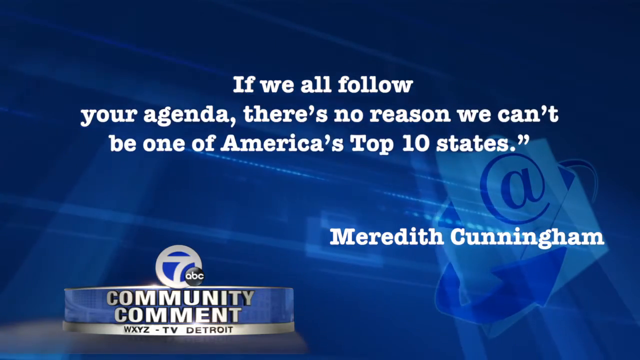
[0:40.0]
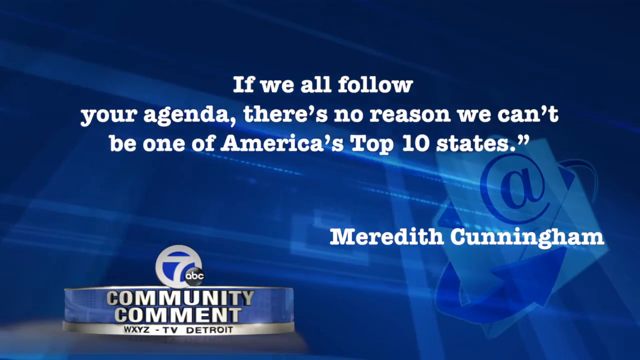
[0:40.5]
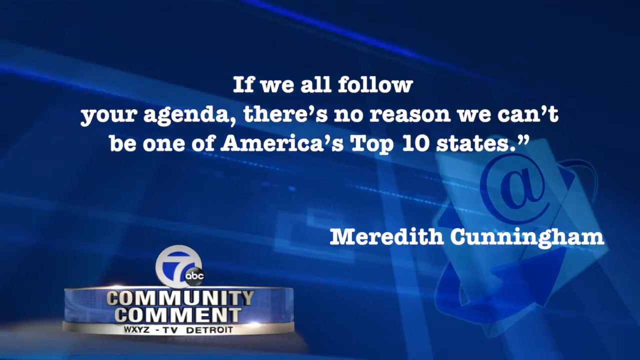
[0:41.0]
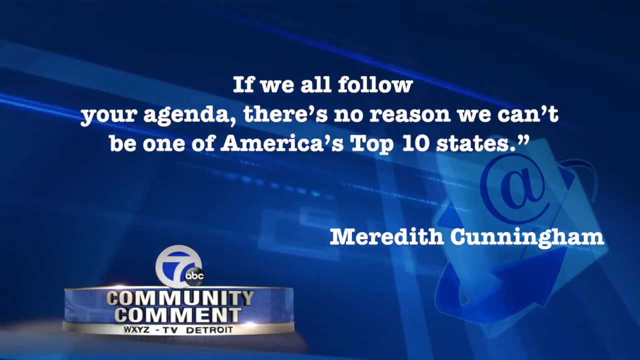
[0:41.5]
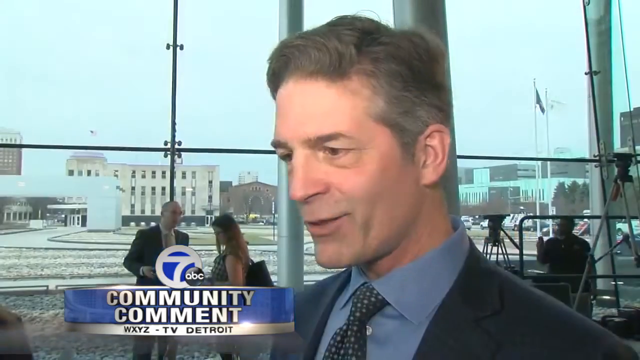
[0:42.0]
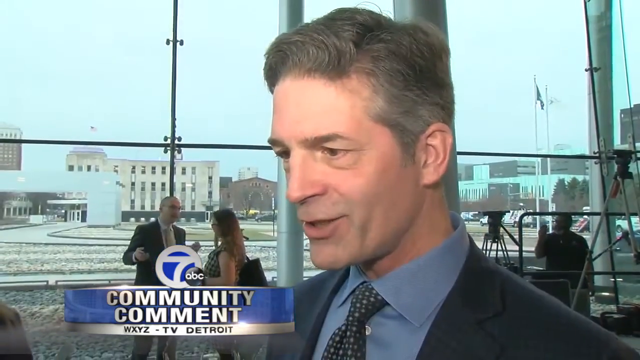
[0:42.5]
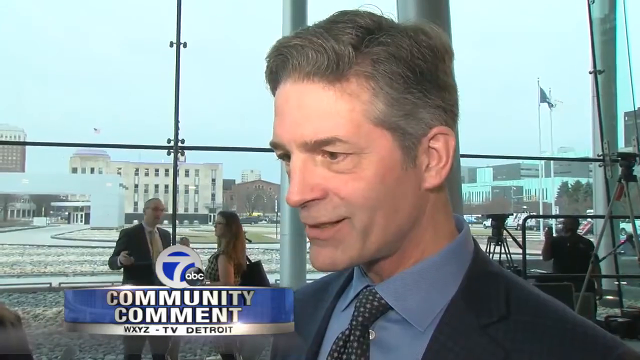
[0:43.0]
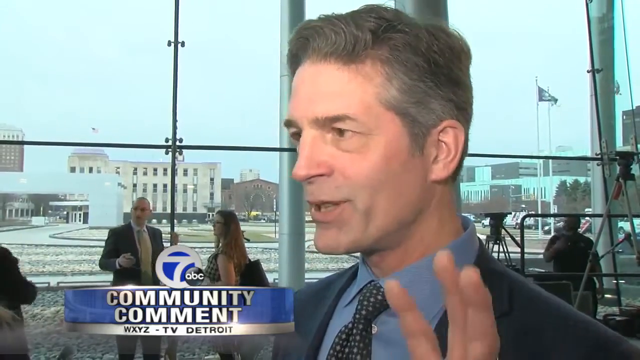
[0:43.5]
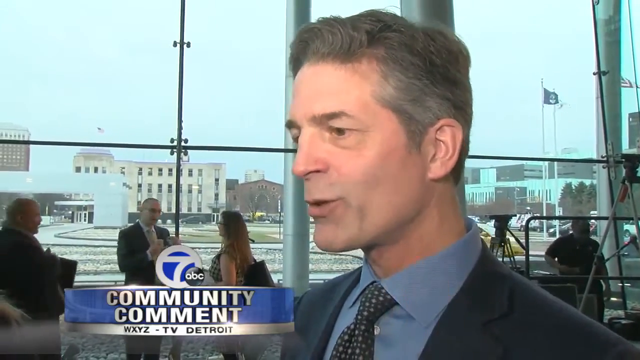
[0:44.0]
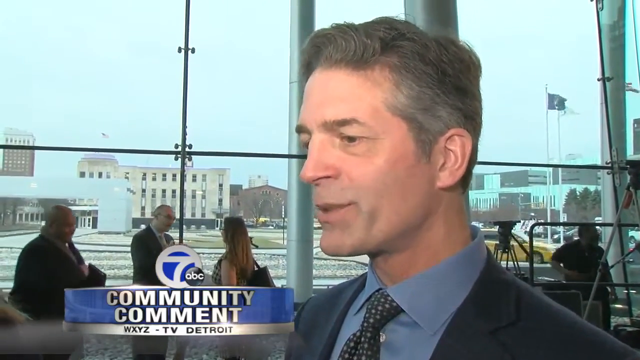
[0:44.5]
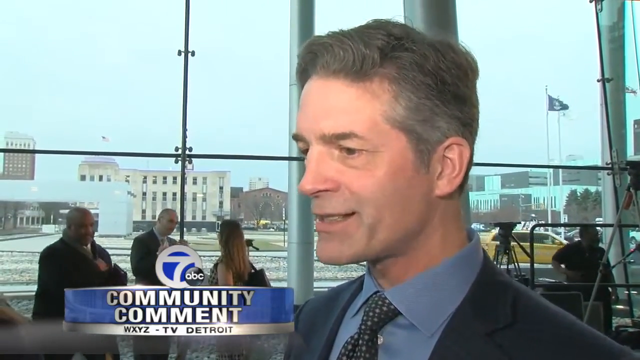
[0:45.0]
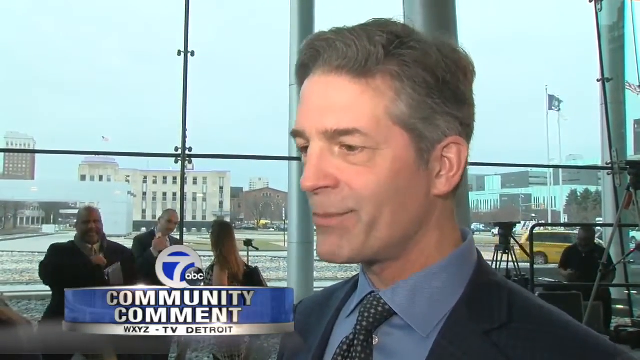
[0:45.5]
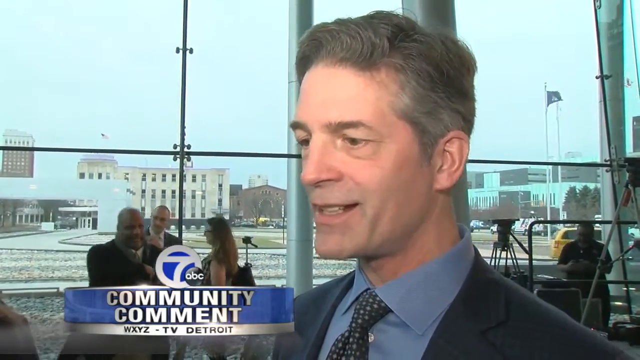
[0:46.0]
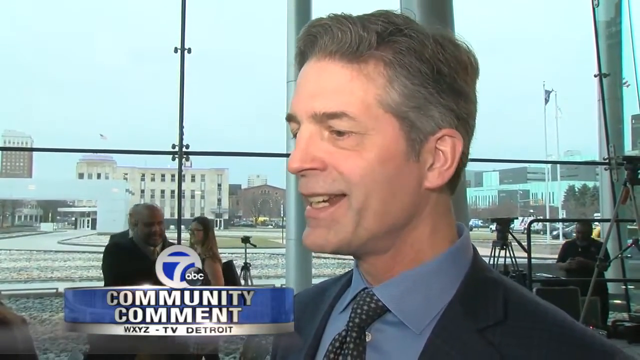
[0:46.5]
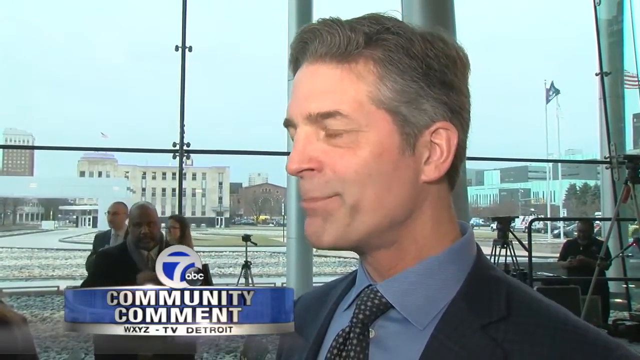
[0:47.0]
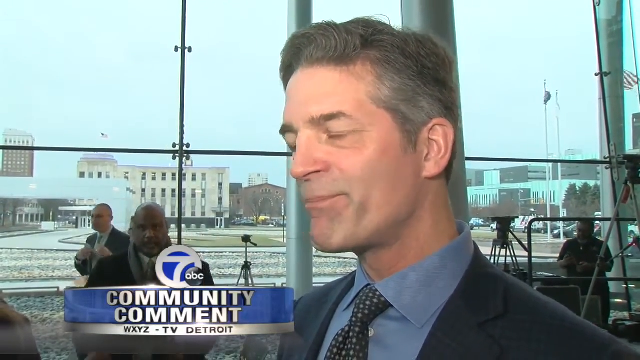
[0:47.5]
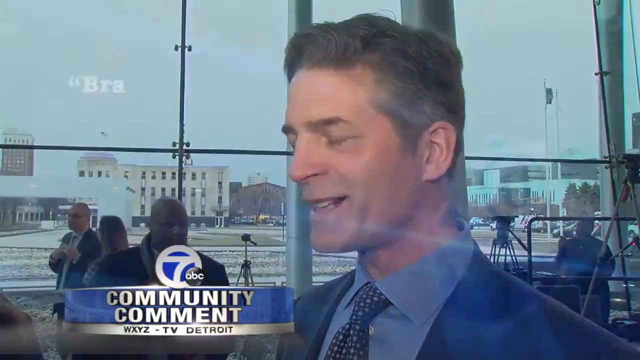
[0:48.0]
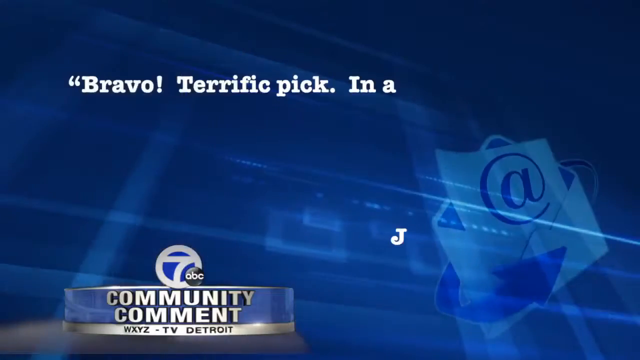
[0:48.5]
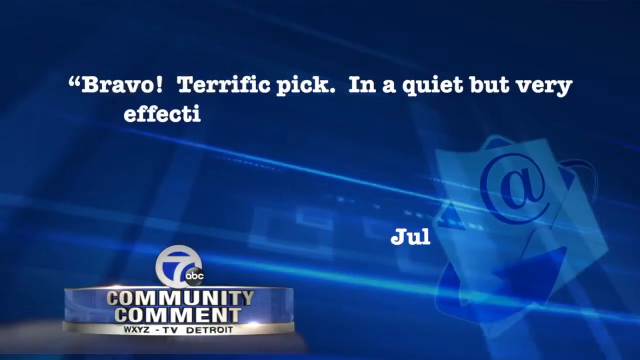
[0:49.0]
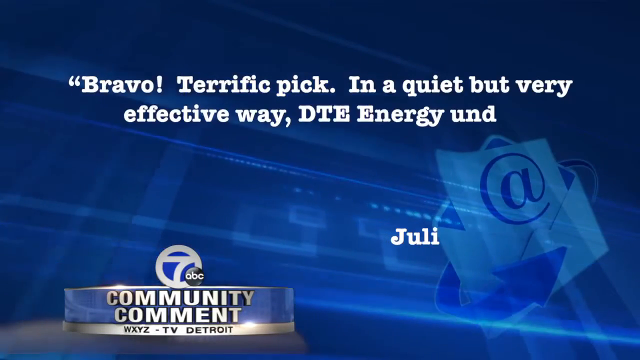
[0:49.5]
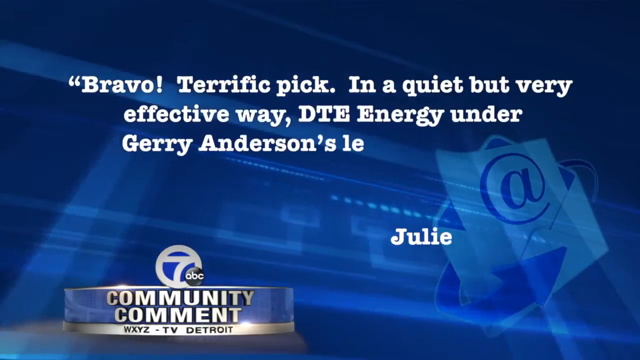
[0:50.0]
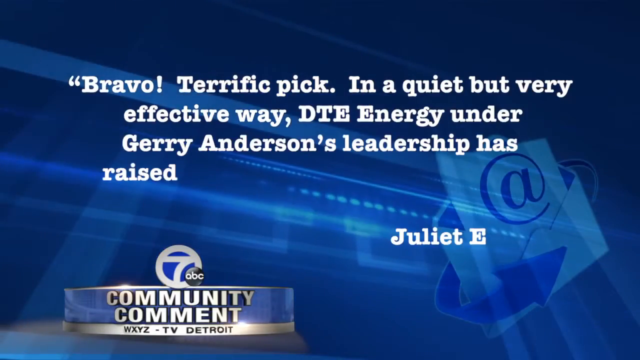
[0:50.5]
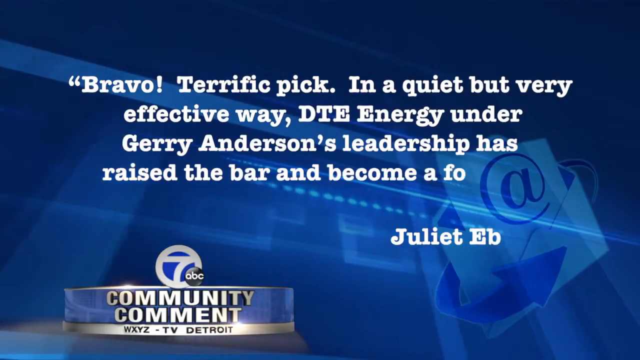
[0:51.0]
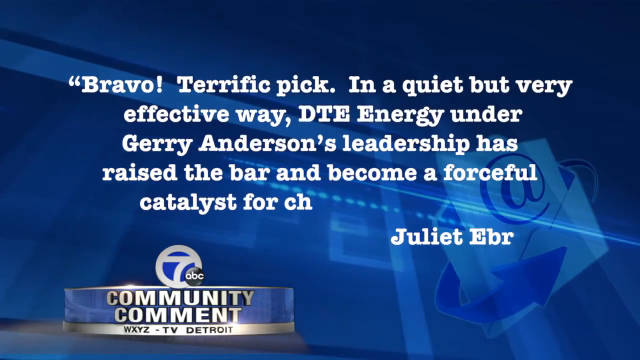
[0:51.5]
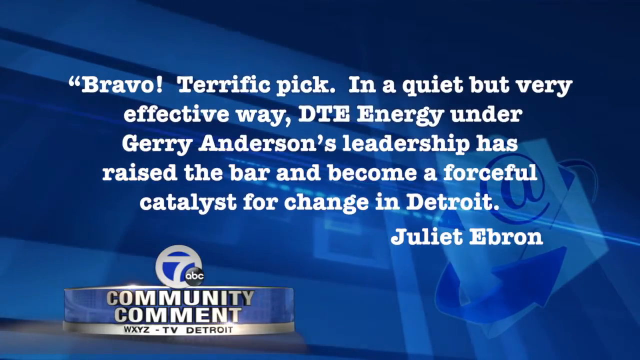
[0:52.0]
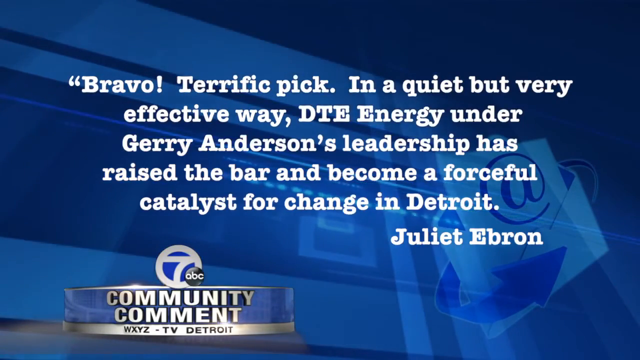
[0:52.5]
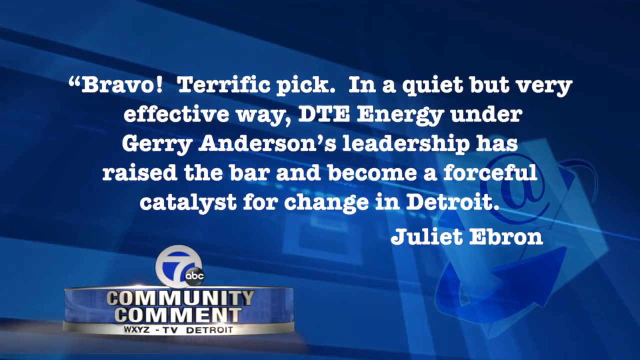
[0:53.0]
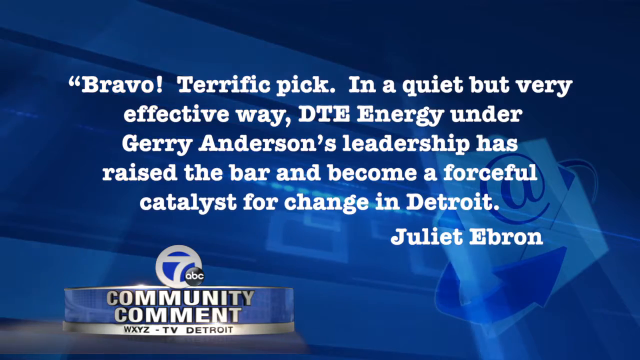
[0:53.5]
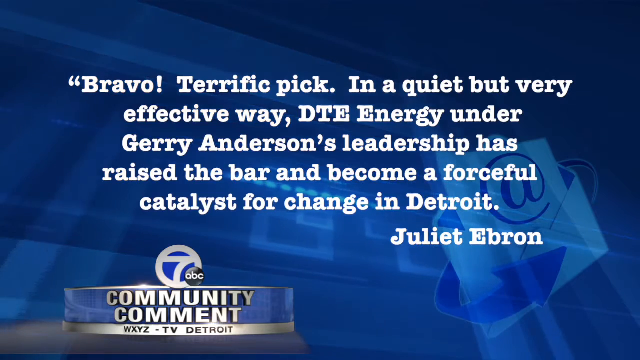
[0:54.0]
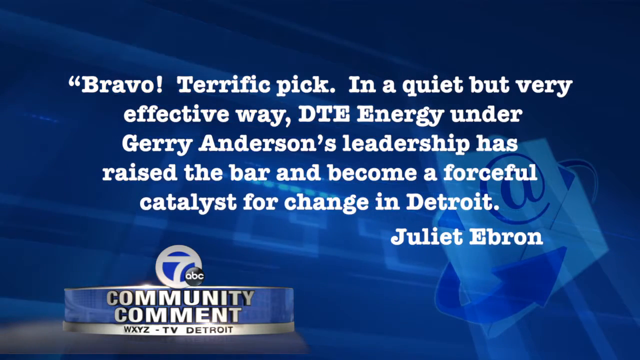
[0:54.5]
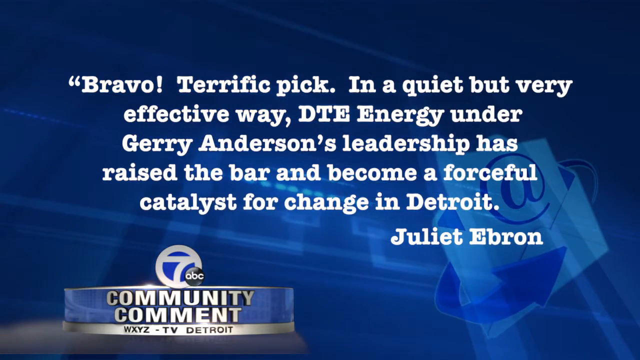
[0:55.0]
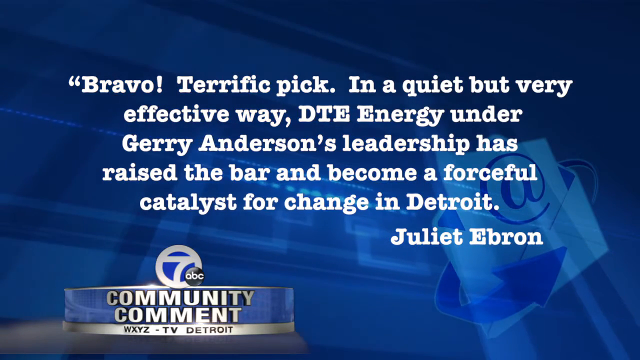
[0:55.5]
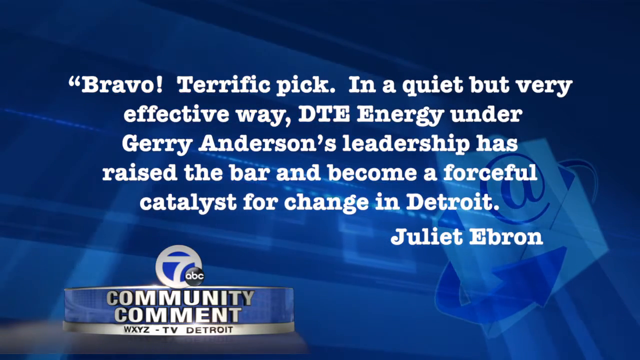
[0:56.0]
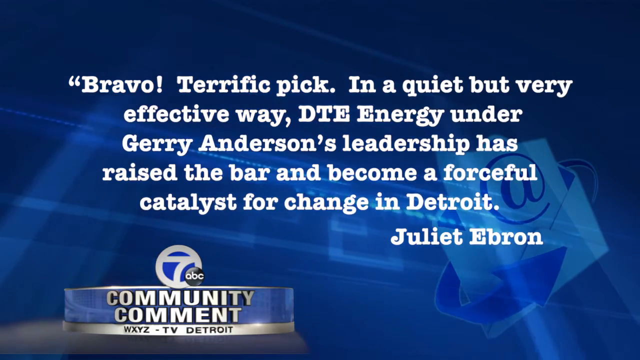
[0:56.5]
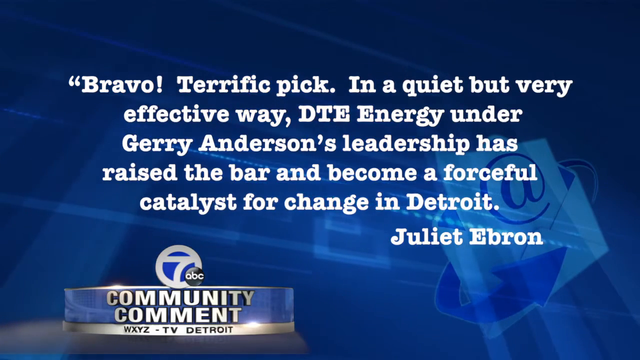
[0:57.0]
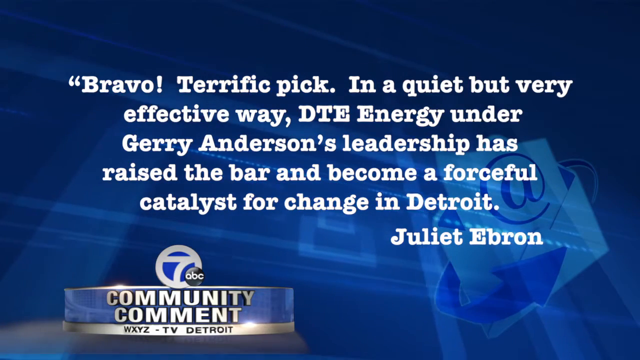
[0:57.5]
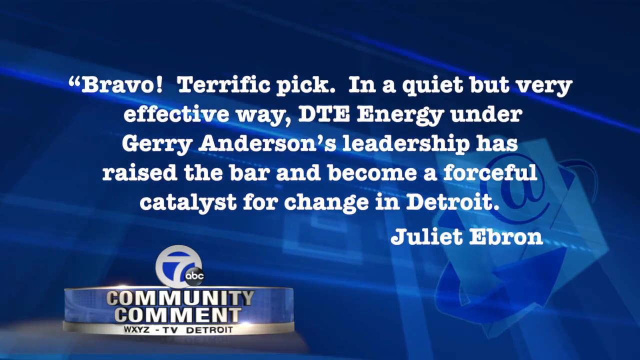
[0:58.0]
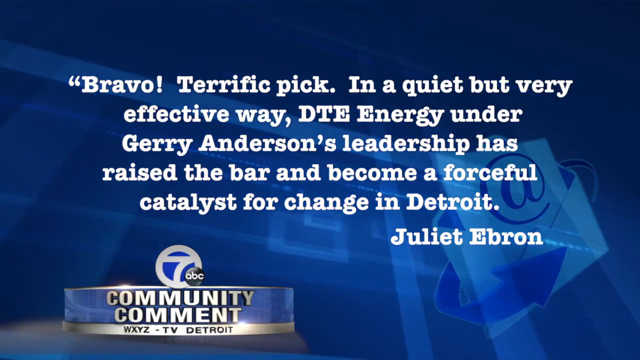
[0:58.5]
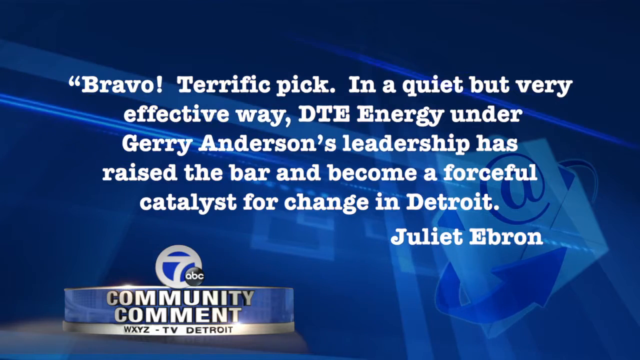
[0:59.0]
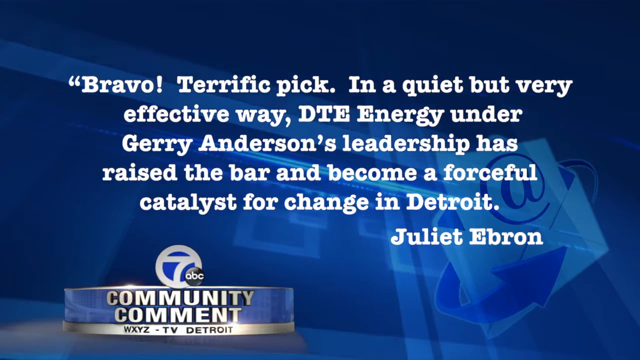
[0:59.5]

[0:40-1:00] A quote from Meredith Cunningham reads: "if we all follow your agenda there is no reason we can't be one of america's top 10 states." The scene then shows several people, four in total, with the main figure being a man who seems to be giving reports. He wears a black jacket, a dark green tie with white dots, and a shirt. The people at the back move forward and back. Far behind them are several storey buildings and some flags. Then a quote appears: "Bravo, terrific pick in a quiet but very effective way. DTE Energy under Gary Anderson's leadership, has raised the bar and become a forceful catalyst for change in Detroit." It is attributed to Juliet Ebron. Text reading "For more UN videos visit www.un.org" also appears.